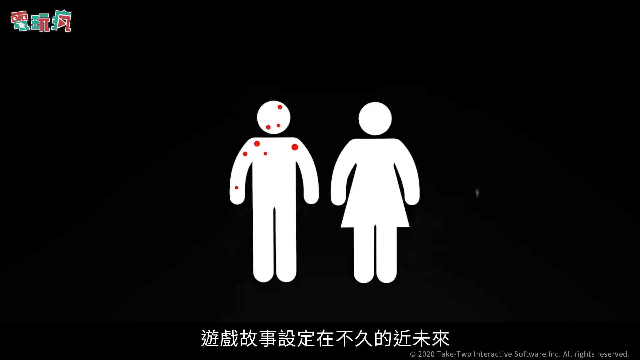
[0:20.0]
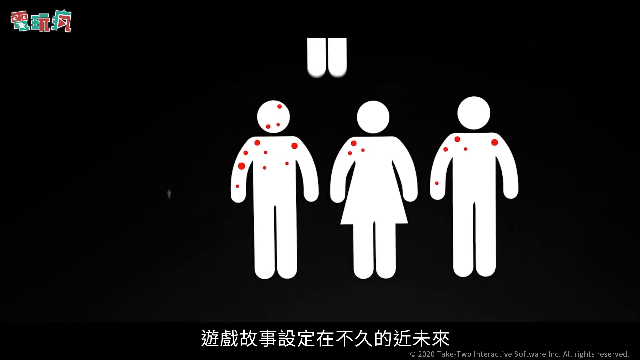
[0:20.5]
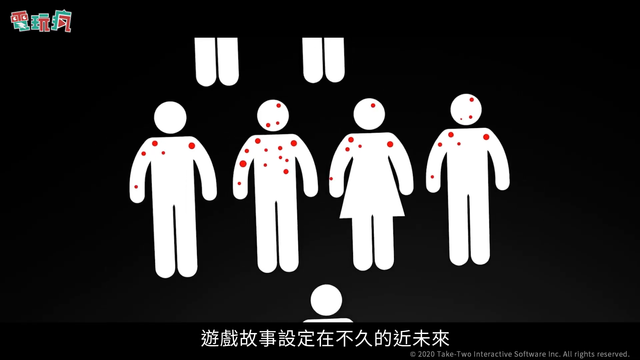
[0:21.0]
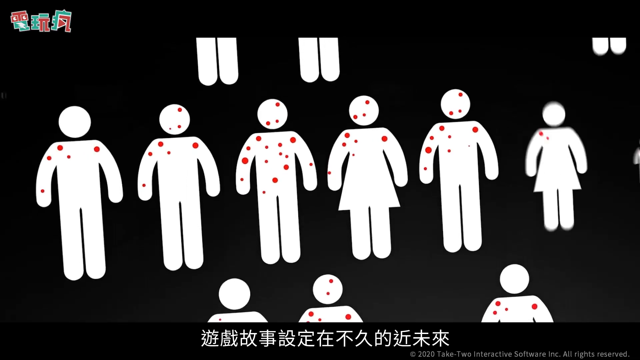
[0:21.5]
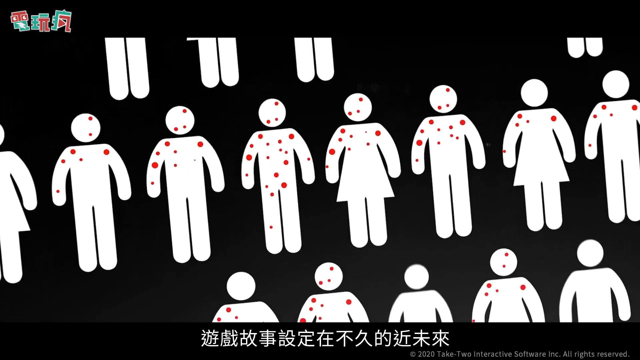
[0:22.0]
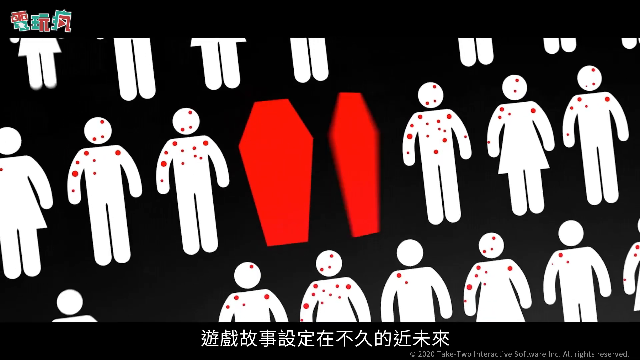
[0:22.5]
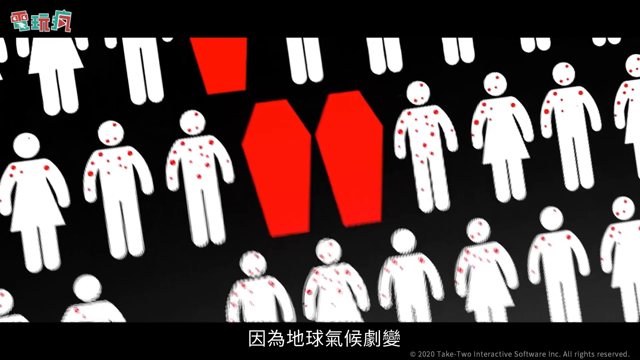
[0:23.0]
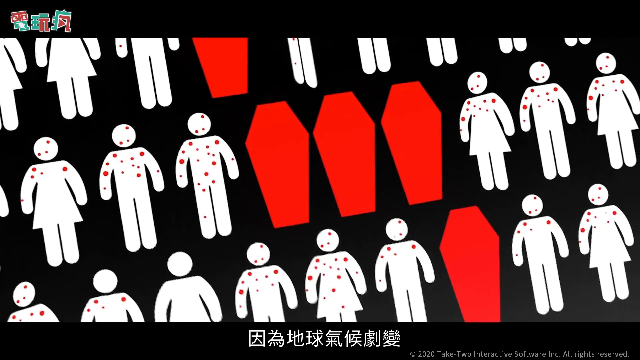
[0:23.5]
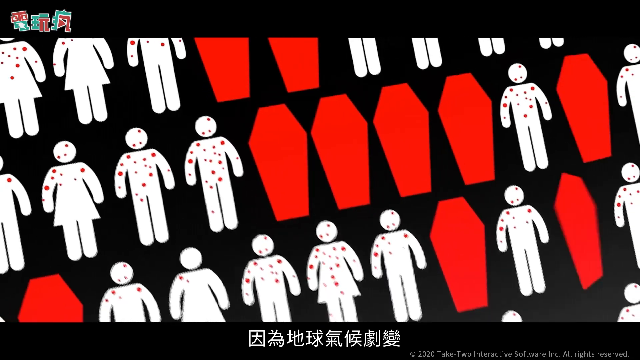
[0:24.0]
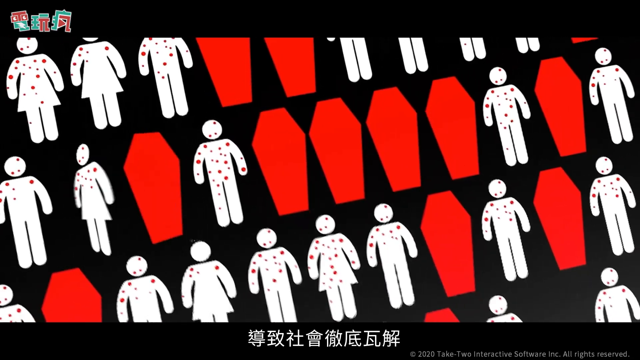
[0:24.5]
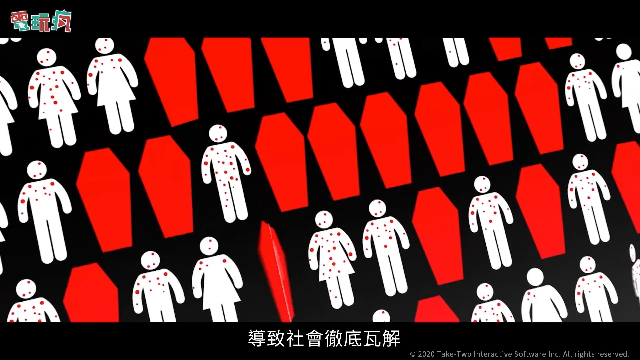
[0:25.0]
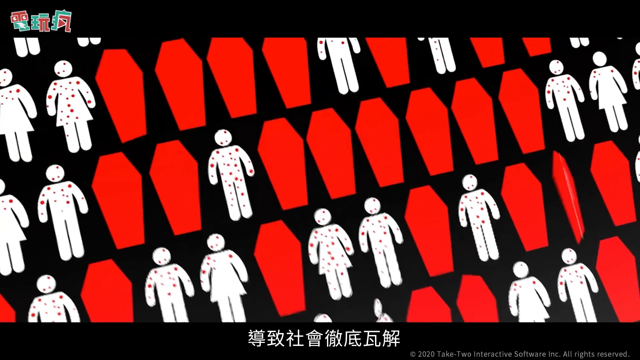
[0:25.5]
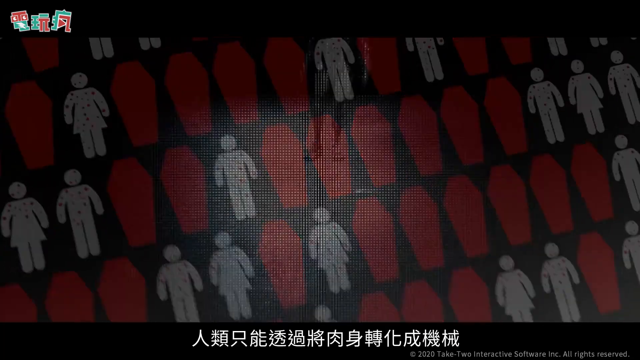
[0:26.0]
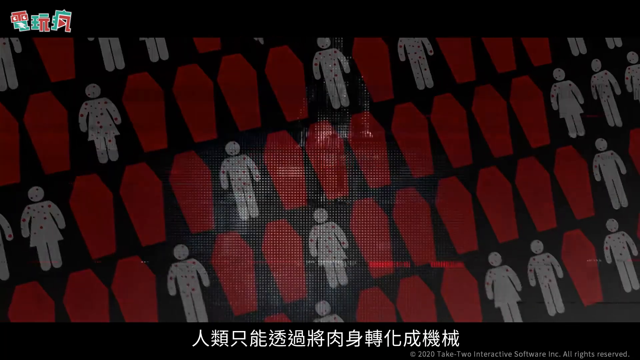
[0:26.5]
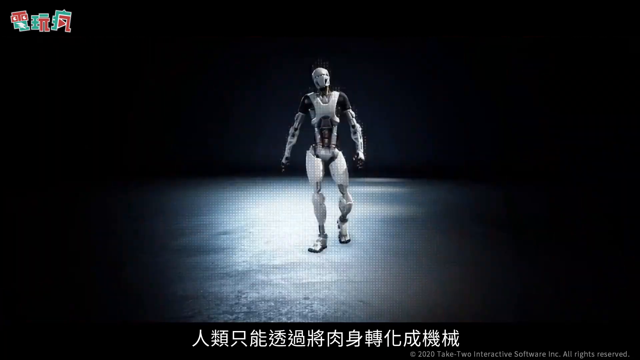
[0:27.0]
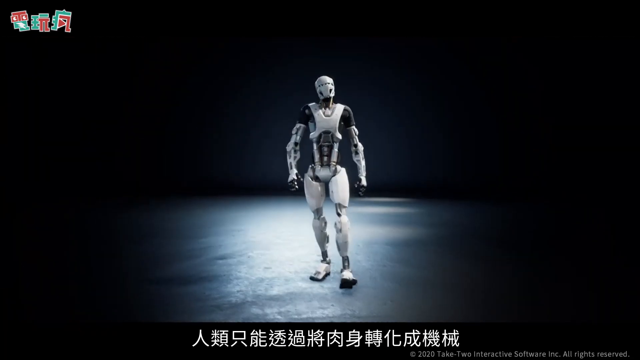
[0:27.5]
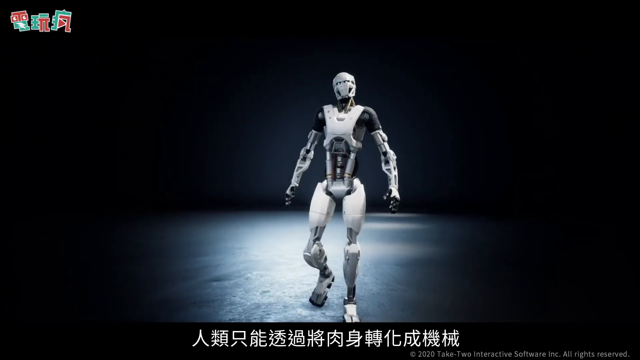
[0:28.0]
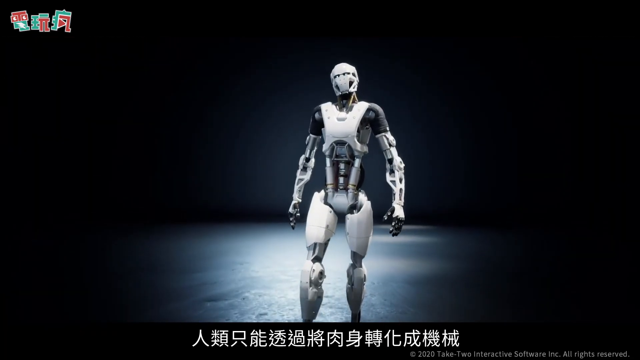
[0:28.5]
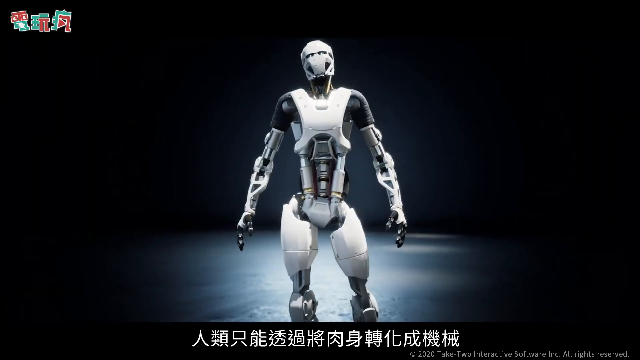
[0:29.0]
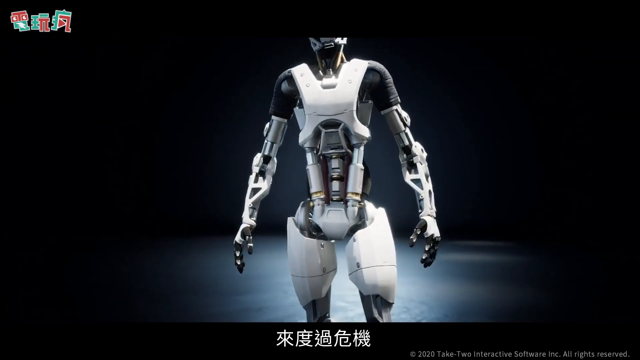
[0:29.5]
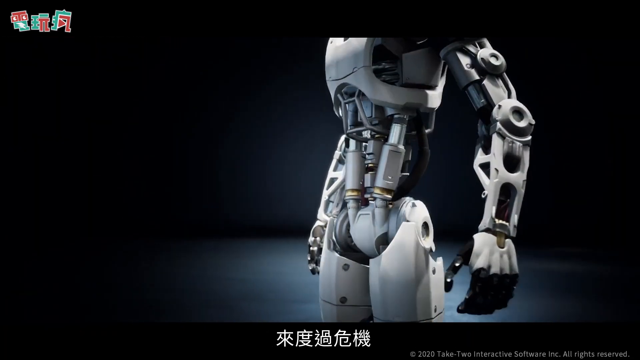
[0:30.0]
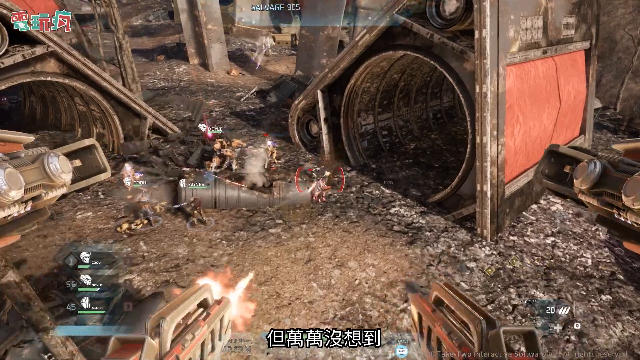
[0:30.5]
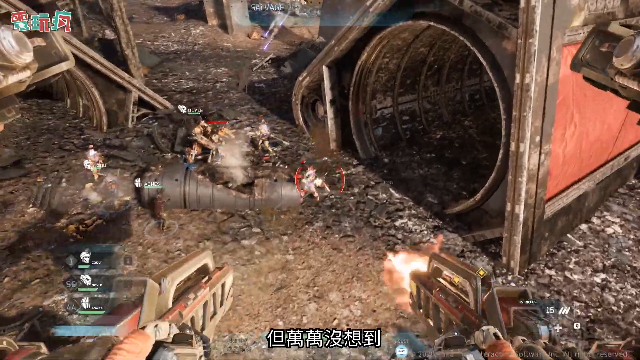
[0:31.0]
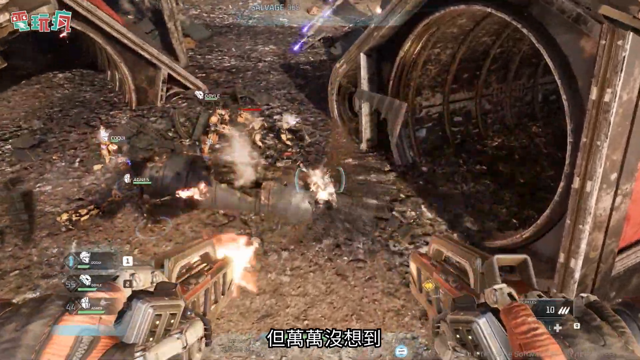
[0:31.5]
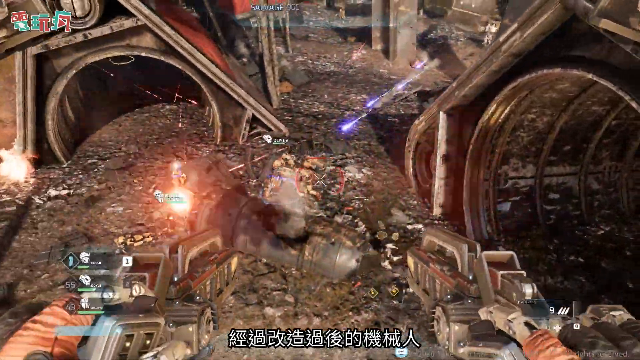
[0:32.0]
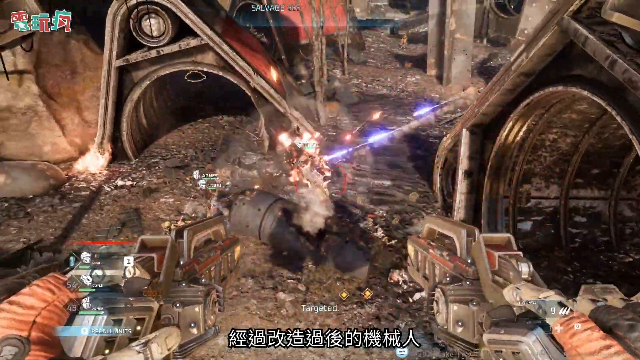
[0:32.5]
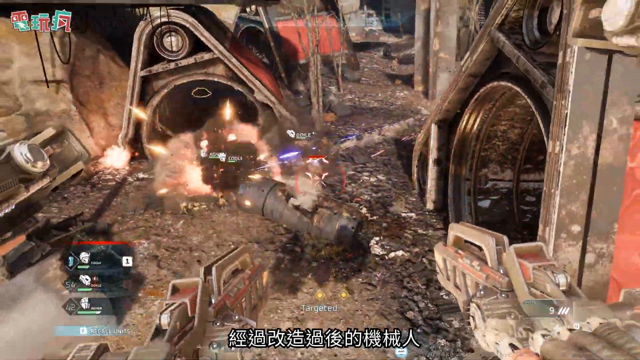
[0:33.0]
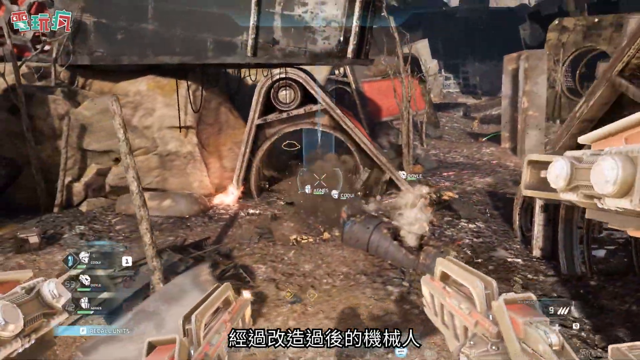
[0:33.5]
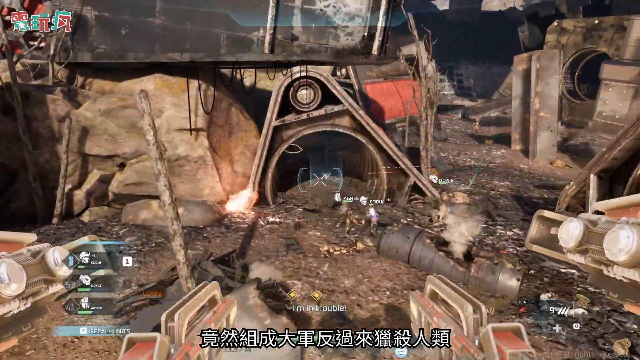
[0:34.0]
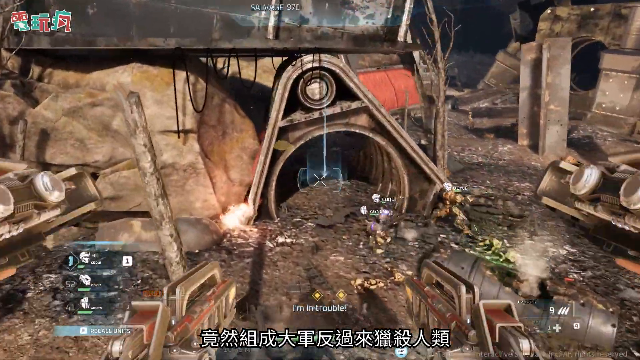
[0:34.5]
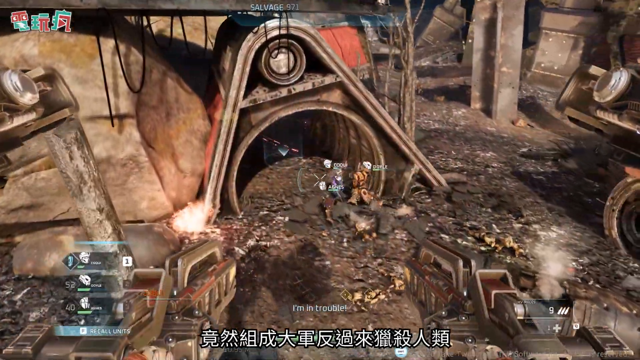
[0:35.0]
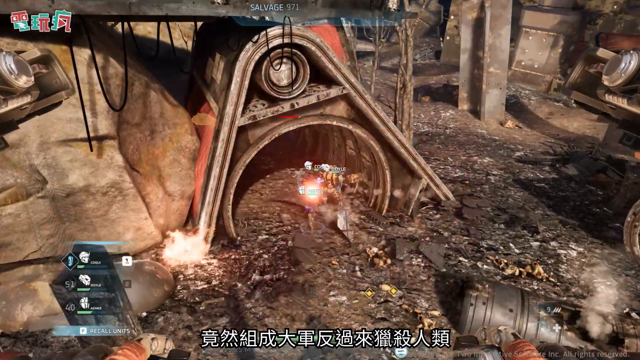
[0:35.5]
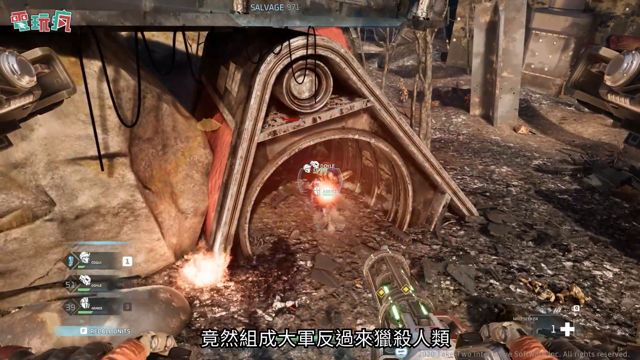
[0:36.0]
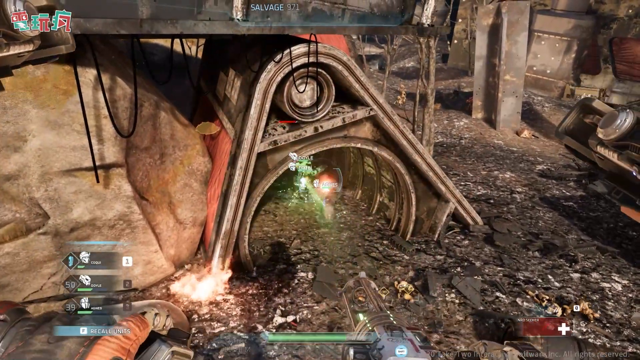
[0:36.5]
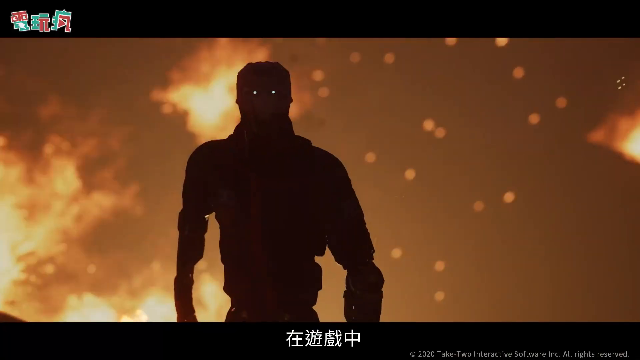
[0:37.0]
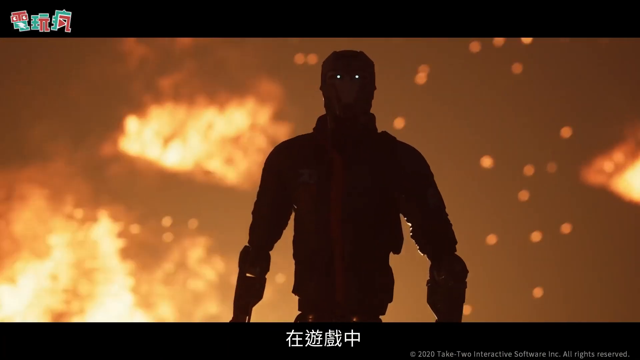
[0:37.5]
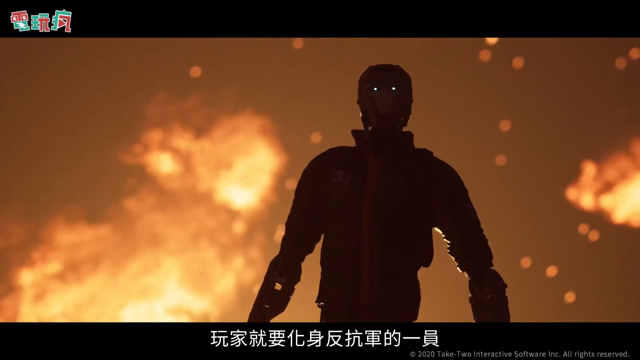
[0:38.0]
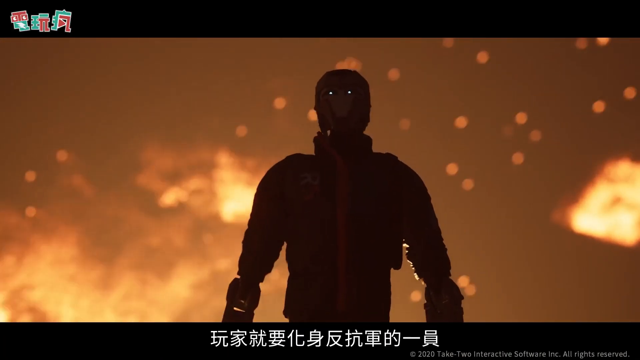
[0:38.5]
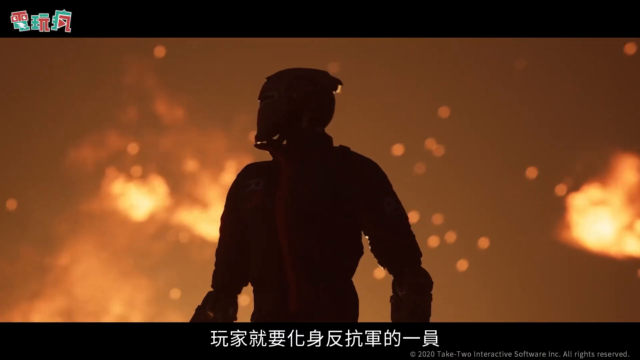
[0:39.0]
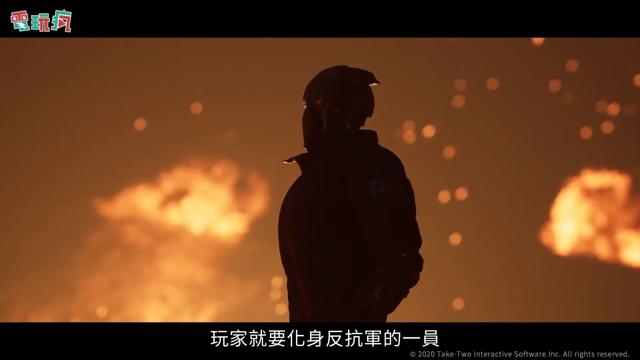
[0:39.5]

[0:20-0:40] More male and female stick figures covered in red dots join the man. The center two turn into bright red coffin shapes, and this happens to random figures throughout several lines of them, with a flipping motion as each goes from a figure to a bright red coffin. Static like that of an old TV appears over the top, and the screen switches to a bionic robot character with a sort of white armor look. It stands in the middle of a floor with light only on the character; everything else is in darkness. A close-up of the character's torso shows more of the hardware inside it. The game screen returns with the guns shooting at the bottom of the screen, in yet another level. This one is brighter and really destitute like the first one. In the center many explosions happen, and lots of shots go around. A few enemy players go into a tunnel in the center of the screen. Then comes a close-up of a character that looks like the same bionic character, though it is in dark silhouette so it is hard to tell. Big explosions and fire happen right behind the character.